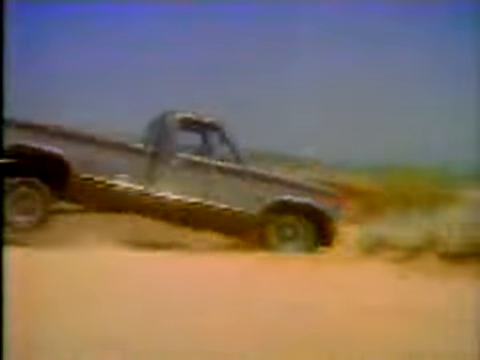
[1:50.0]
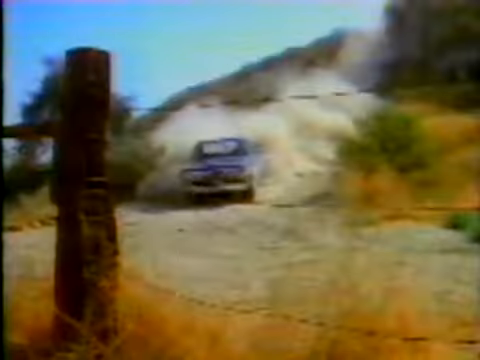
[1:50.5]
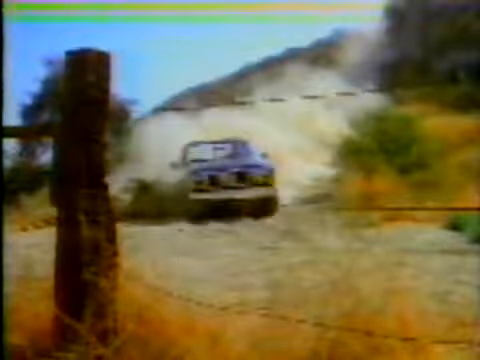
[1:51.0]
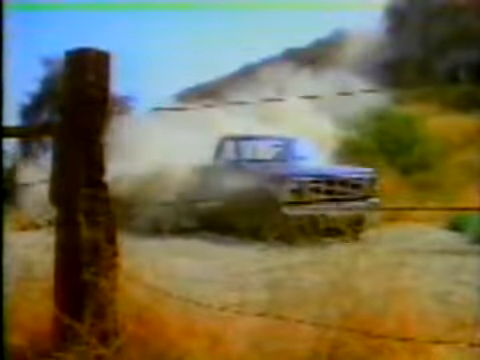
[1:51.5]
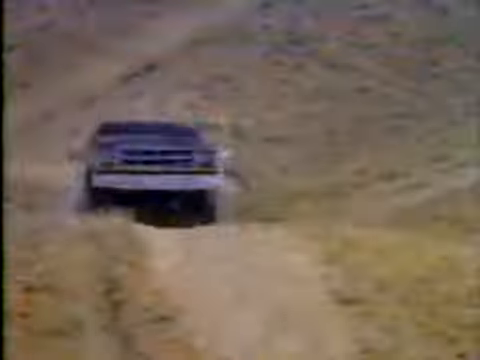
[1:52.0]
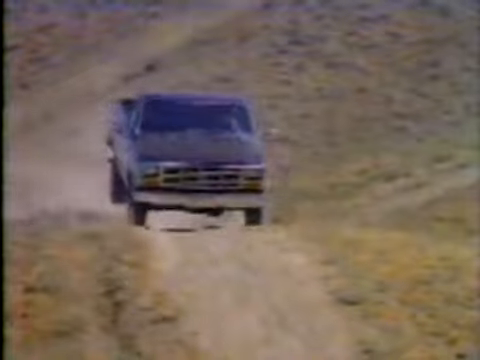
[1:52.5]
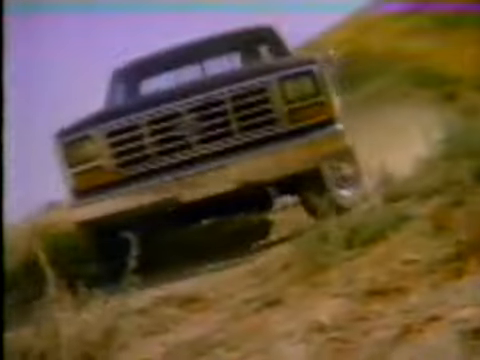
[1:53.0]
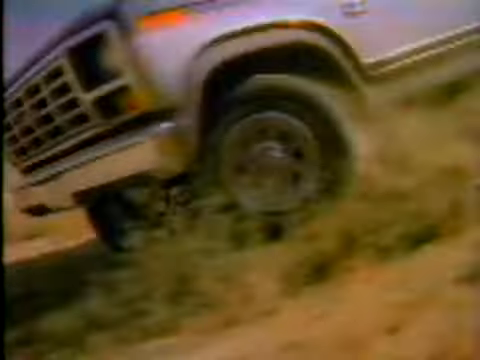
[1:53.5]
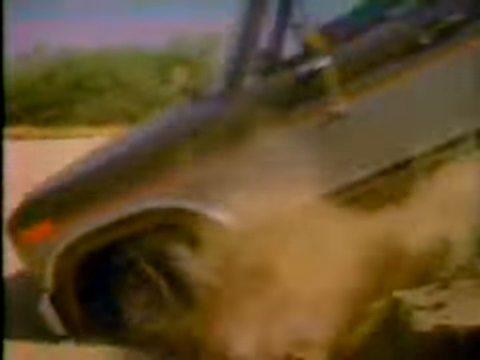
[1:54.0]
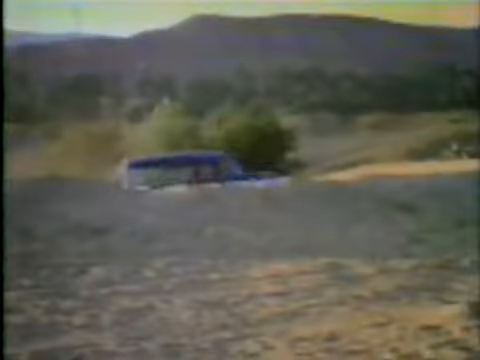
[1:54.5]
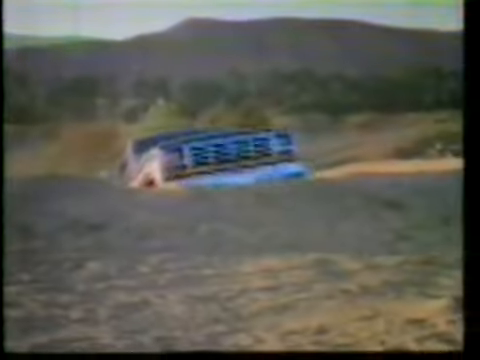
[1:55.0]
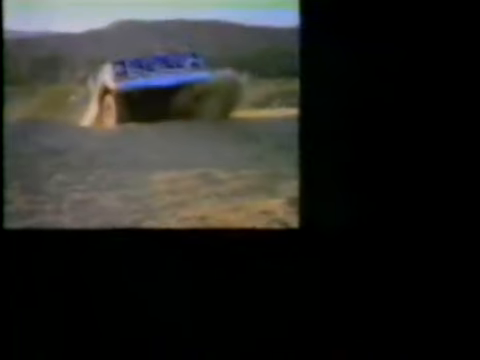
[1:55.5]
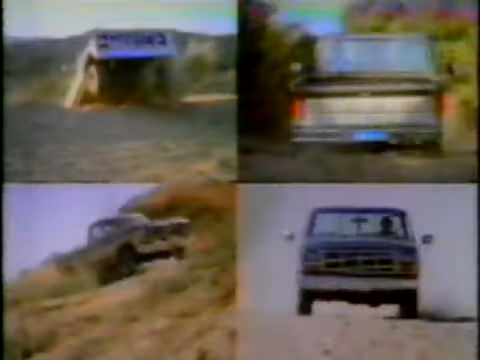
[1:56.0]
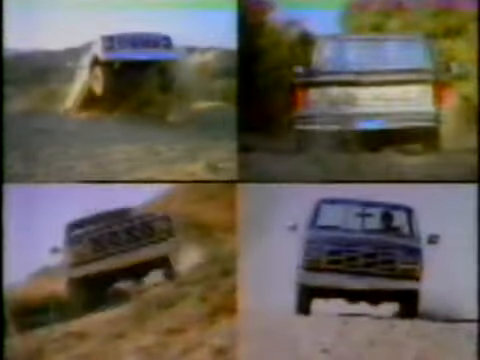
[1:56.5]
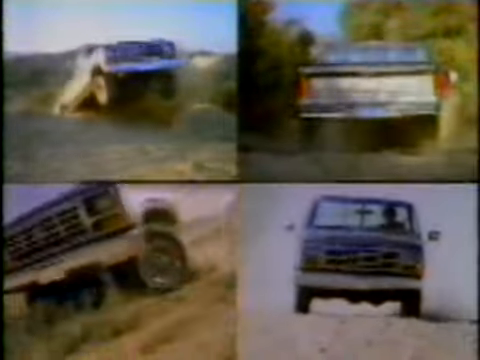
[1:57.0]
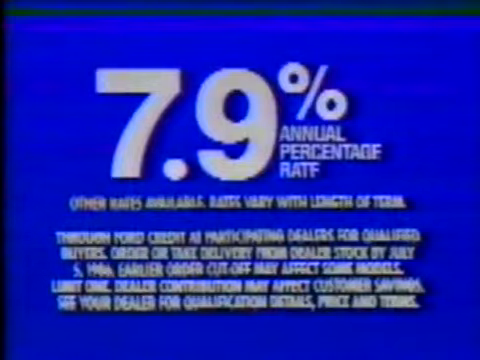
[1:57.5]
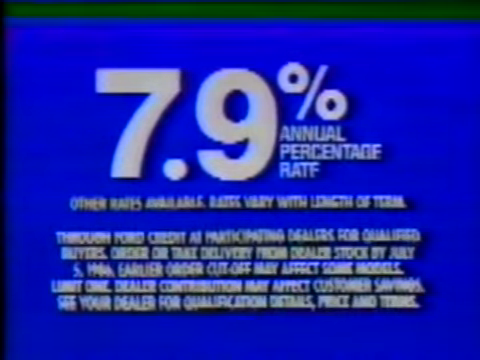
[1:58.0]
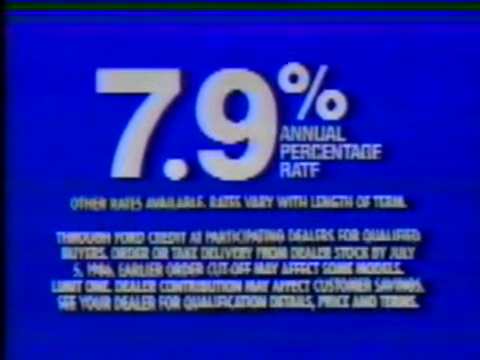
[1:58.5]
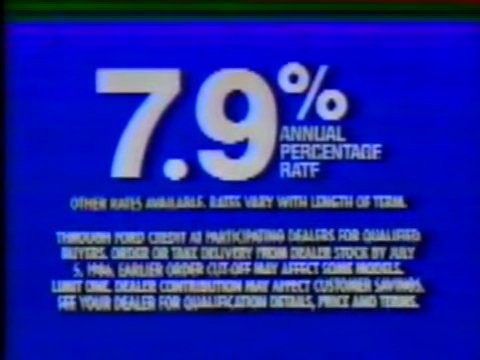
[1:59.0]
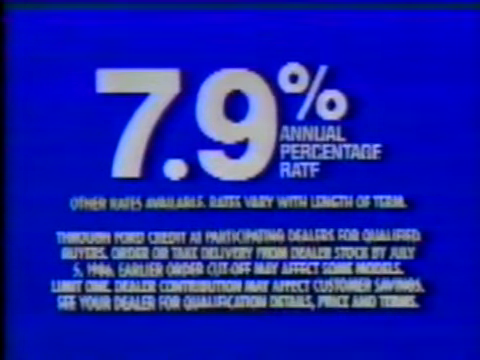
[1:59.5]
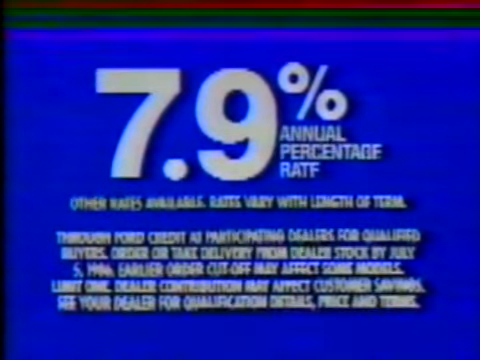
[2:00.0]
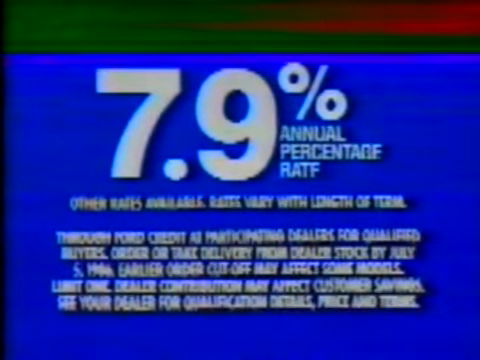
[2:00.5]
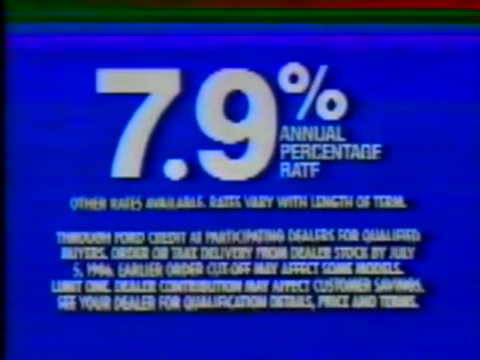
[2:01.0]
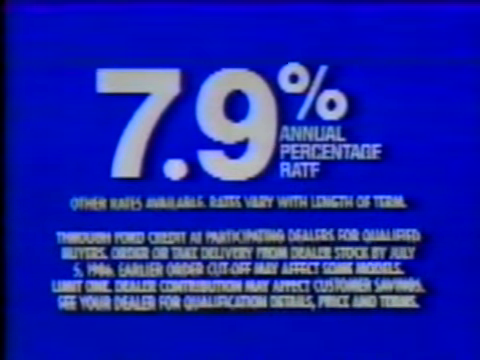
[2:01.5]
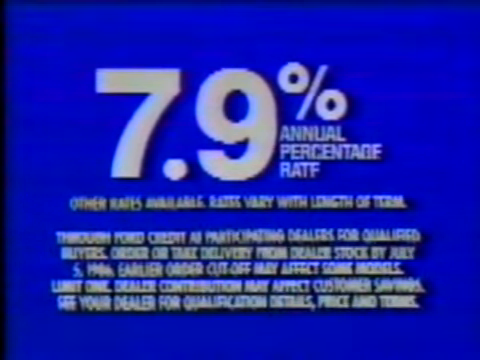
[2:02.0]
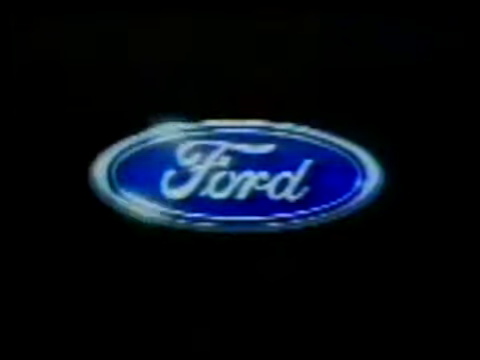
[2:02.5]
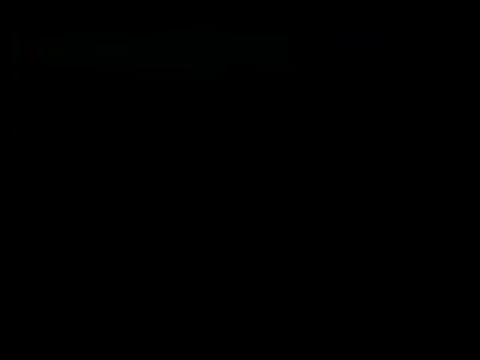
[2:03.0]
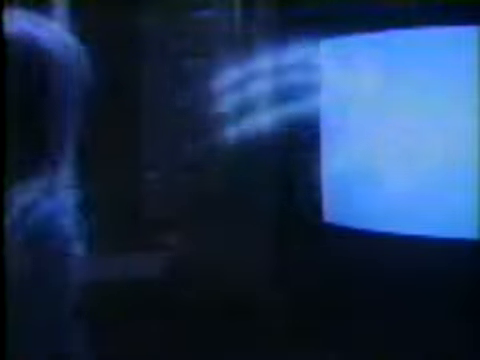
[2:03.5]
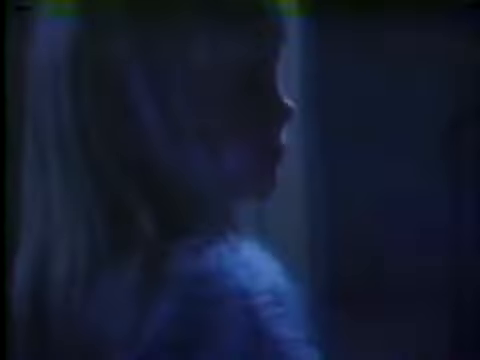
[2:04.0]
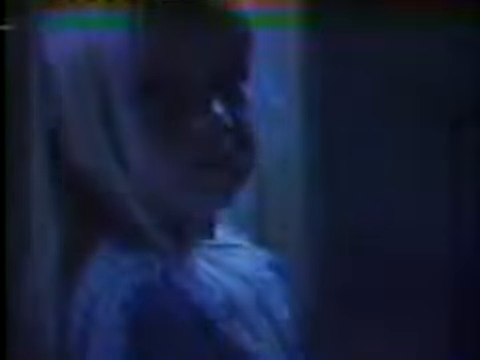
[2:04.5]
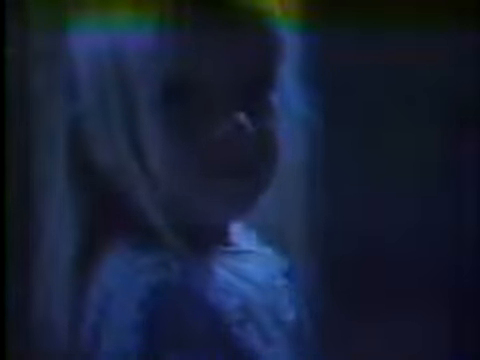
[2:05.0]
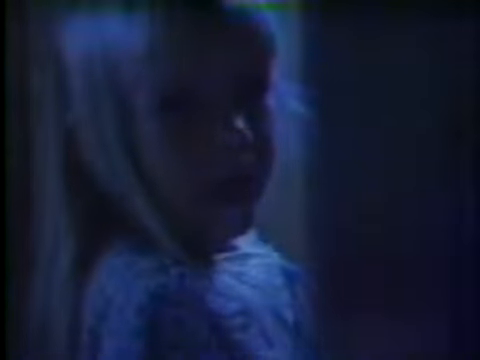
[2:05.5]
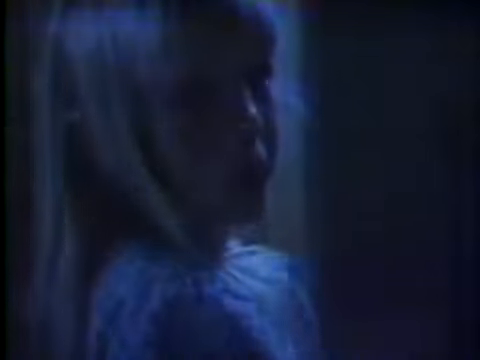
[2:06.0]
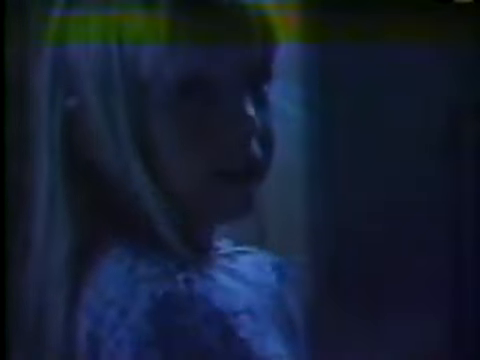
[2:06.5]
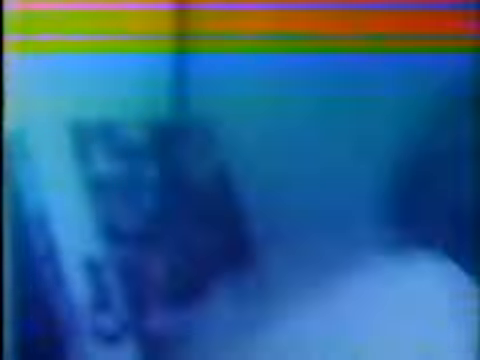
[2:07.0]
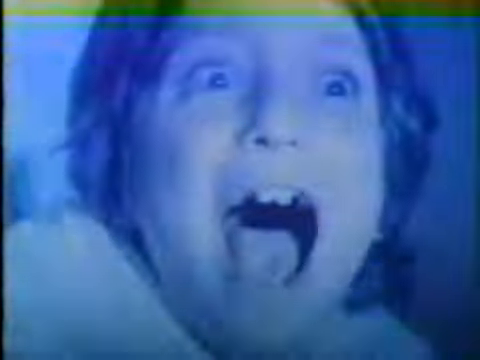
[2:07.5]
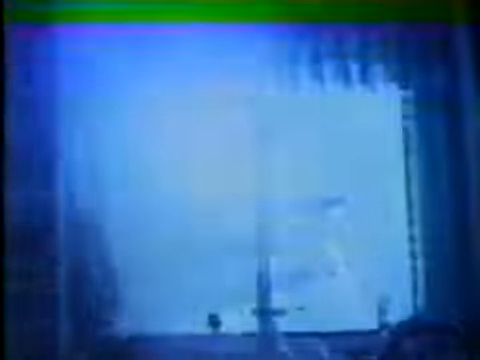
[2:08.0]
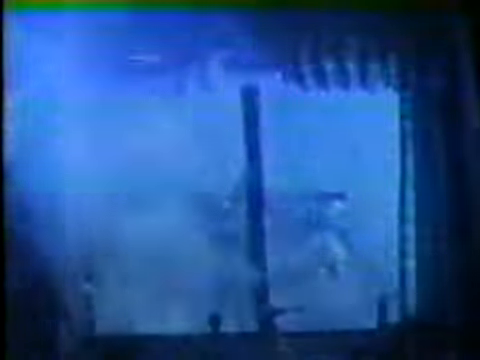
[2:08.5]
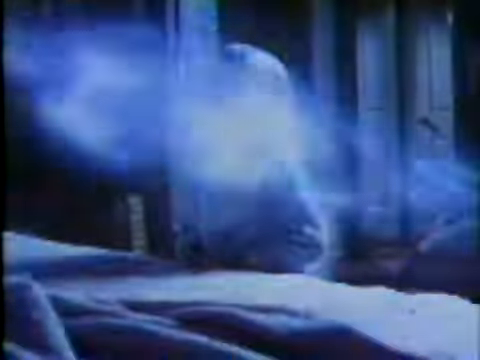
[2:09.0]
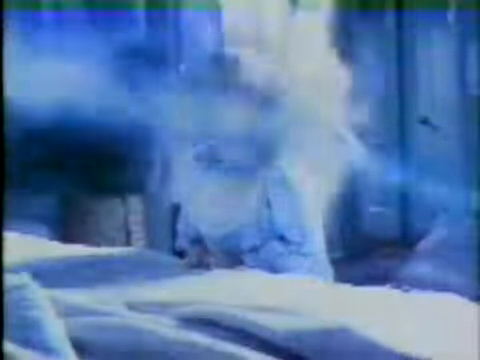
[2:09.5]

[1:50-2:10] Cars run around a field in an advertisement involving cars. Then an advertisement for a movie appears that looks like a horror movie: a little girl with blonde hair screams loudly as a hand, a skeleton hand, comes out of a TV.